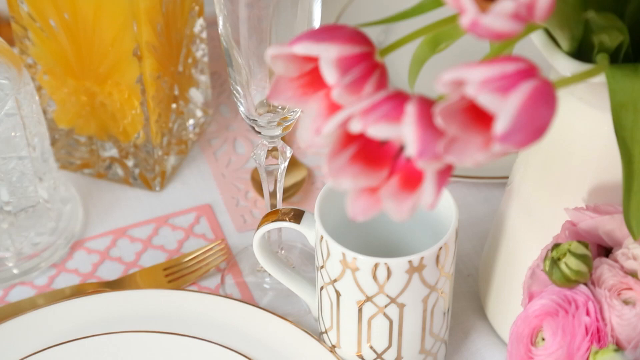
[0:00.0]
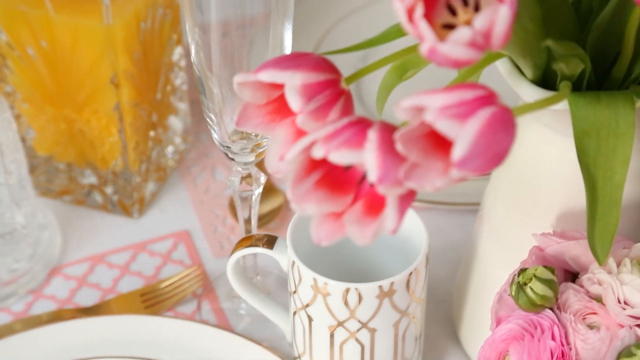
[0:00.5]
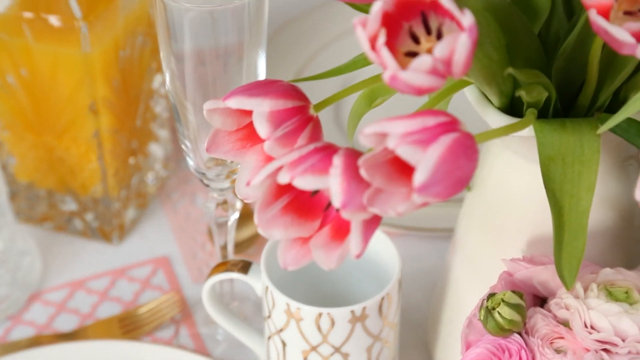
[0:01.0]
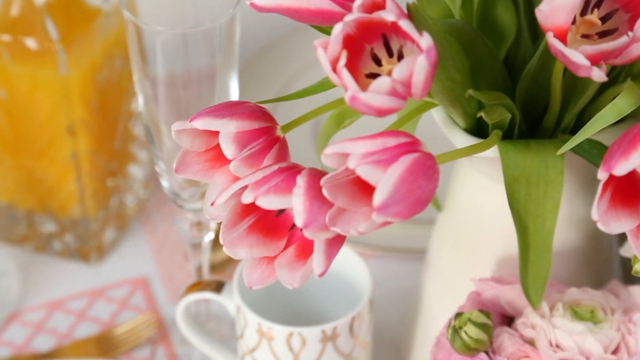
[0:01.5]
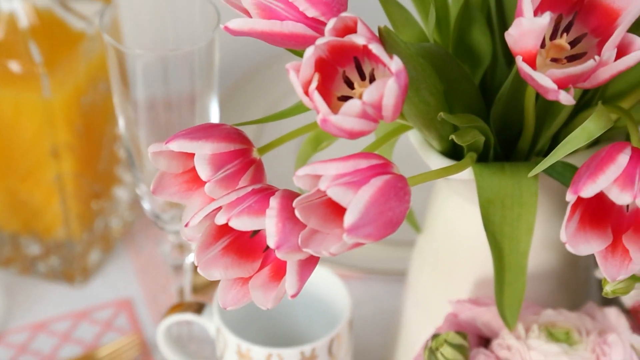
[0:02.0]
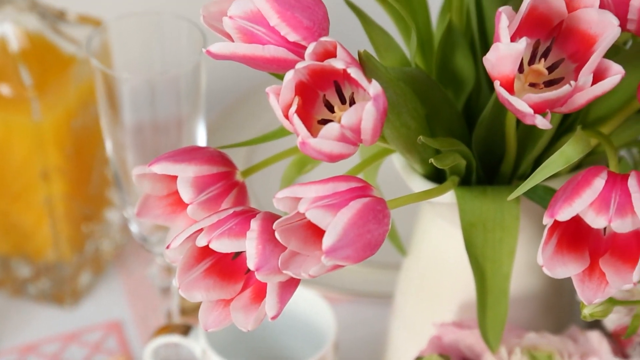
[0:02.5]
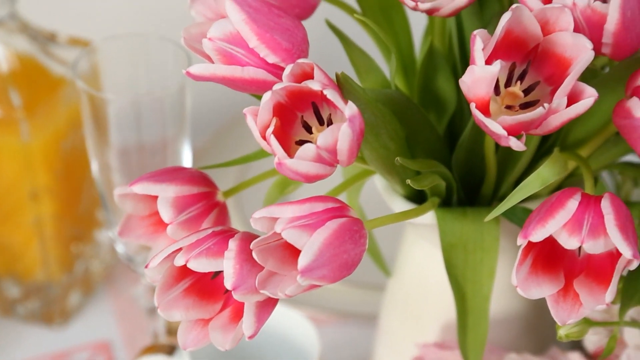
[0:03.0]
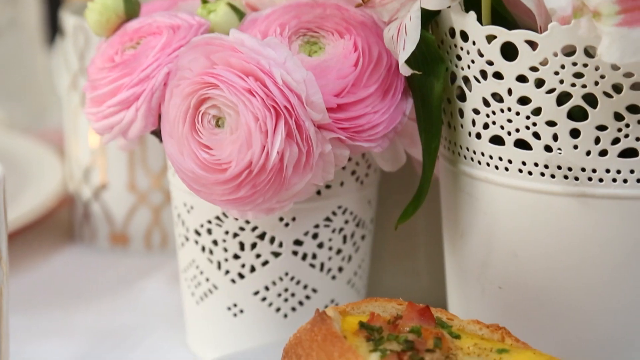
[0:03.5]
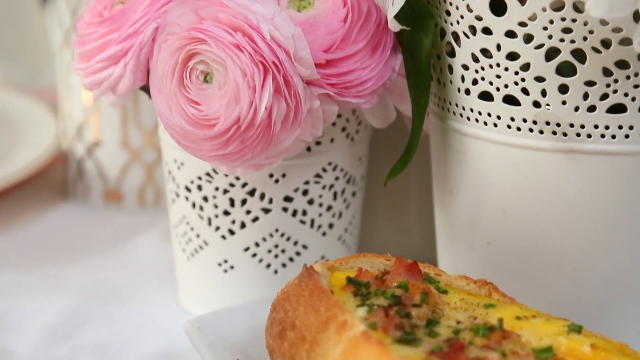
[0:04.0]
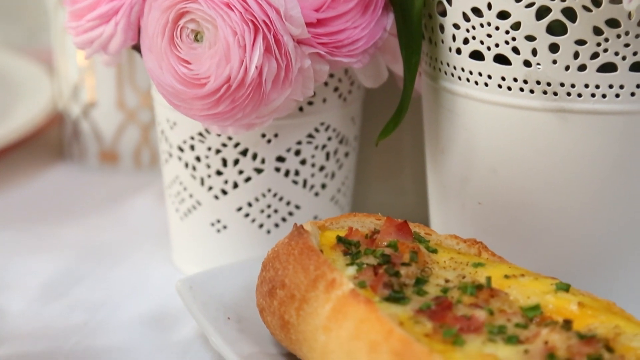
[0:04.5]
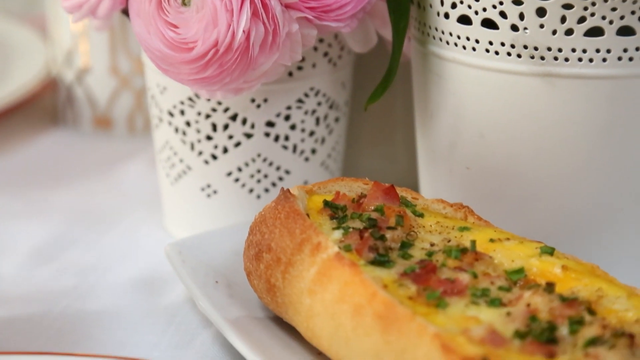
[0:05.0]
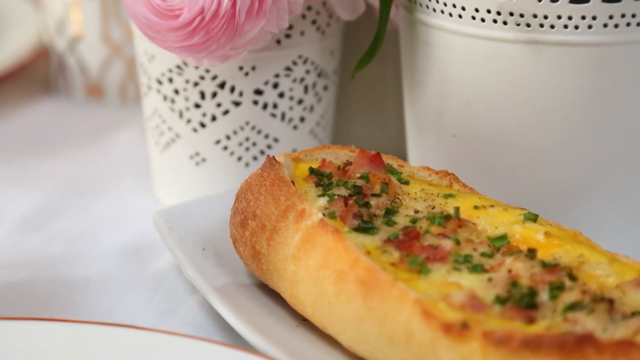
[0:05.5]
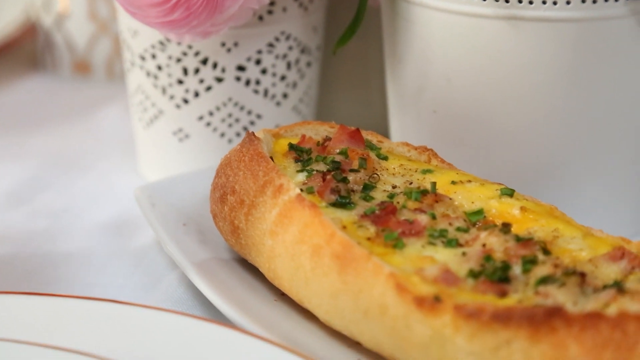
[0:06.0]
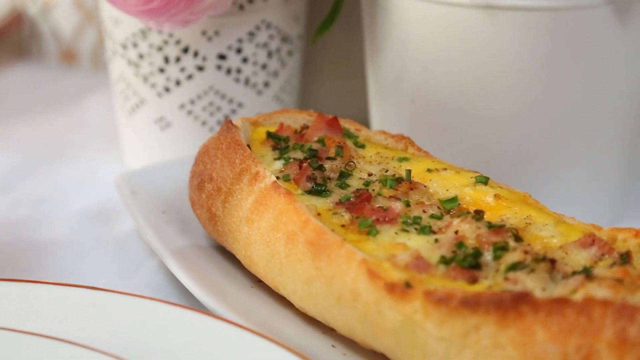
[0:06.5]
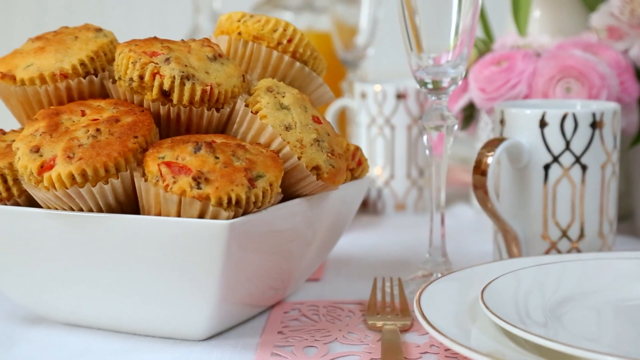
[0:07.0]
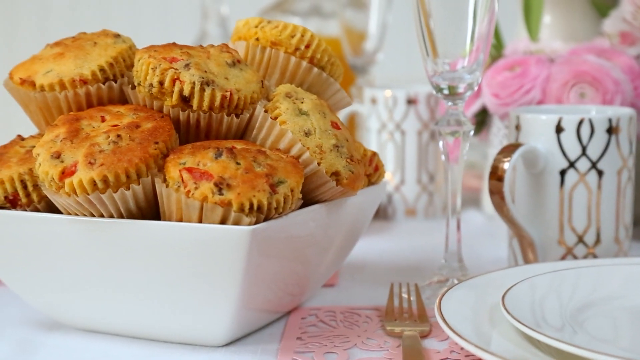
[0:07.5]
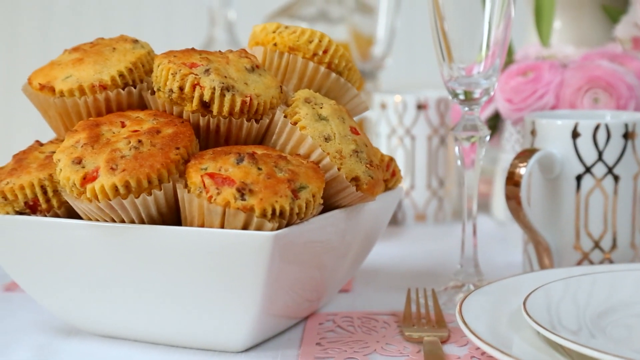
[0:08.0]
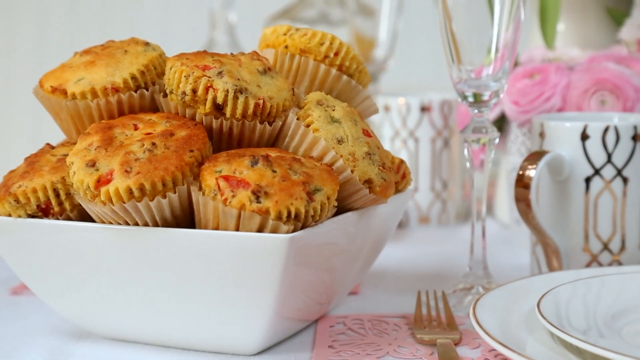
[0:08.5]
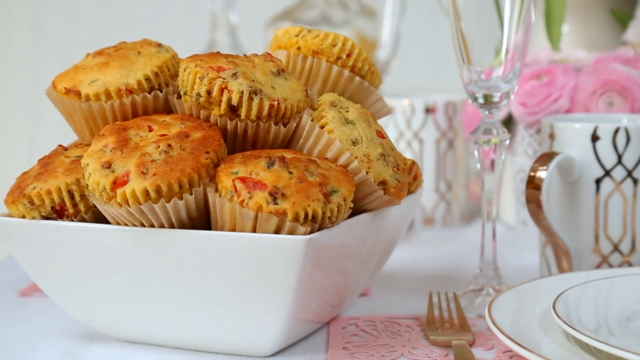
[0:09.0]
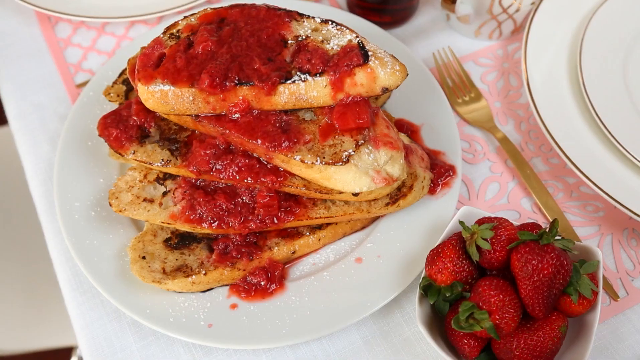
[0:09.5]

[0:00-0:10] Pink tulips are in a vase, and the table holds fine dining silverware, glasses and coffee mugs. More flowers follow, artificial pink flowers, maybe roses, in a white vase or pot. A baguette-style piece of bread is cut in half down the middle with some cheese in it. An angular bowl is filled with muffins, maybe 15 of them, and there is more silverware along with white plates. Next comes a vertically stacked pile of bruschetta, with the tomatoes coming down over the stack, next to a small bowl of strawberries.